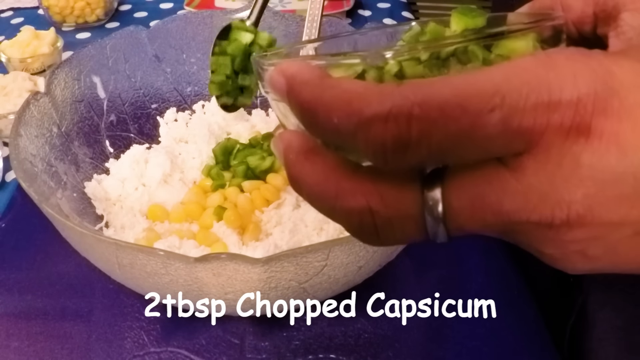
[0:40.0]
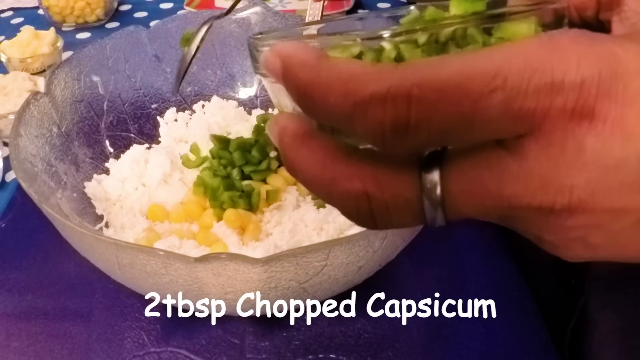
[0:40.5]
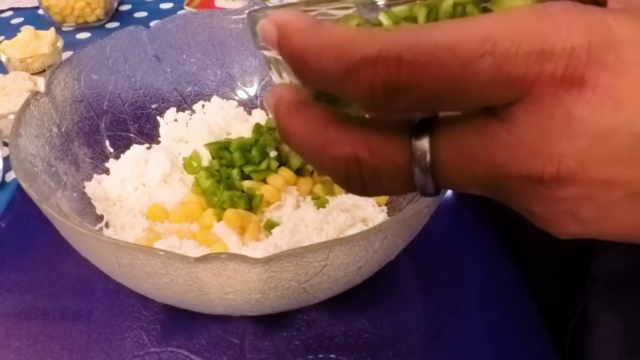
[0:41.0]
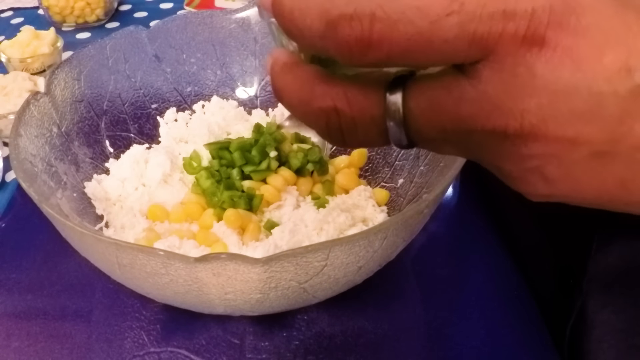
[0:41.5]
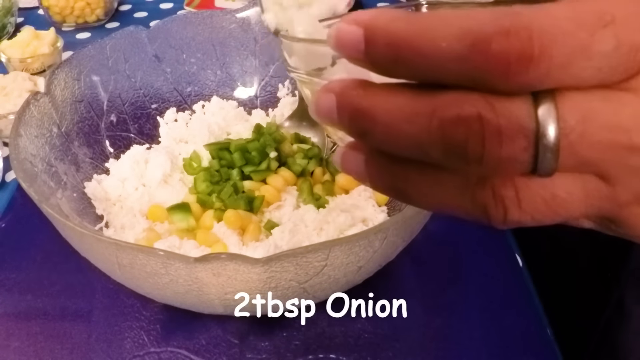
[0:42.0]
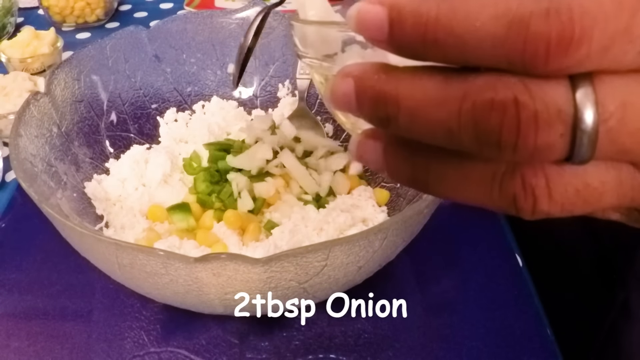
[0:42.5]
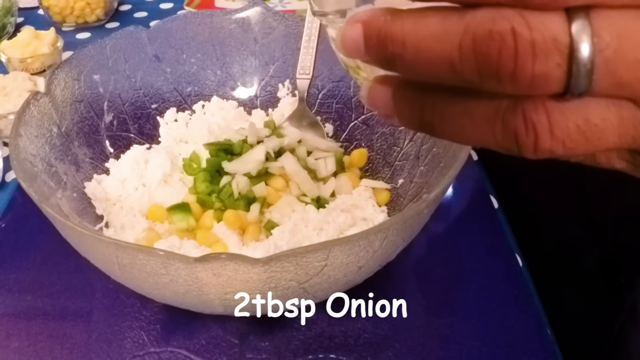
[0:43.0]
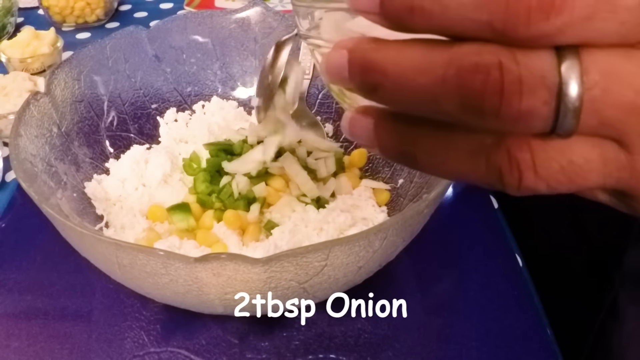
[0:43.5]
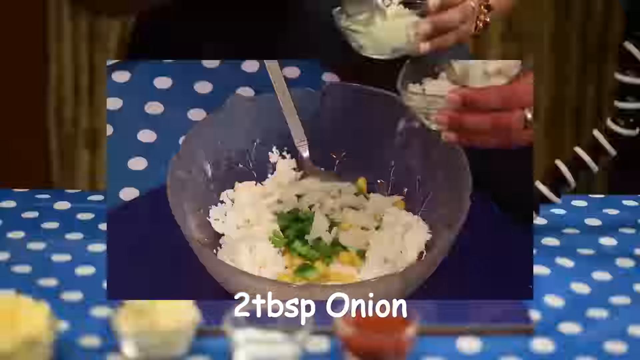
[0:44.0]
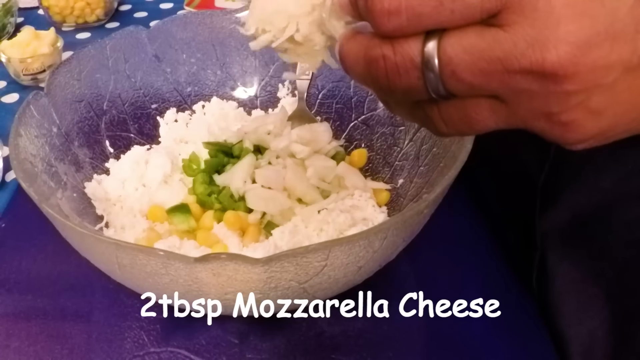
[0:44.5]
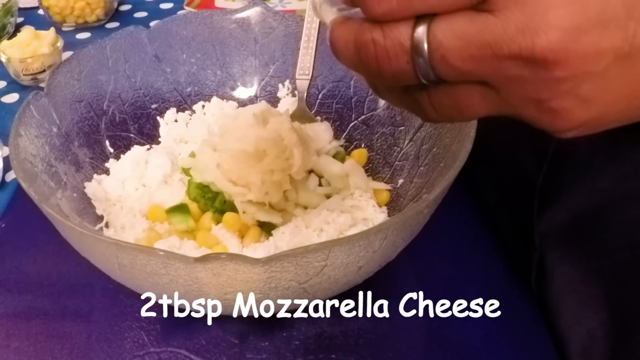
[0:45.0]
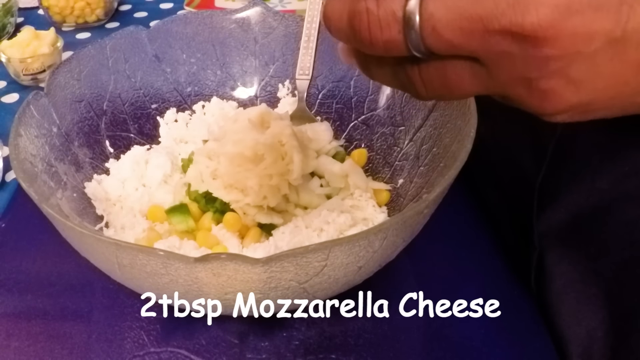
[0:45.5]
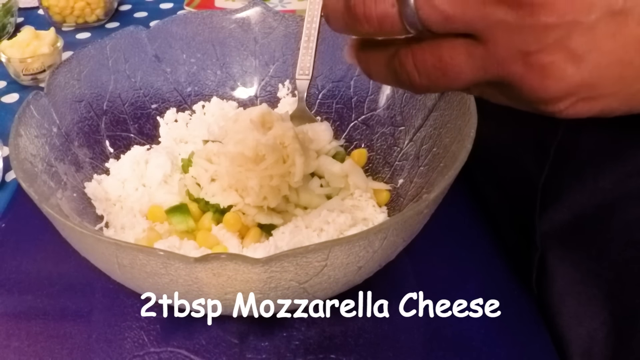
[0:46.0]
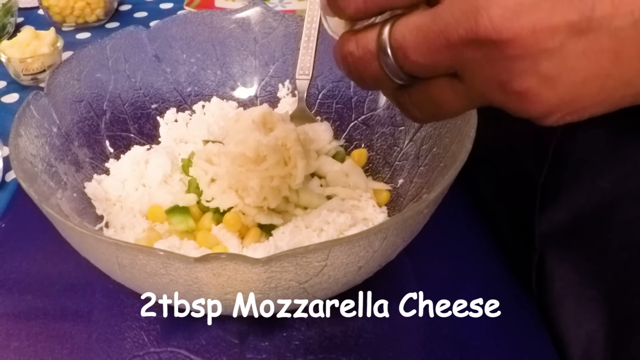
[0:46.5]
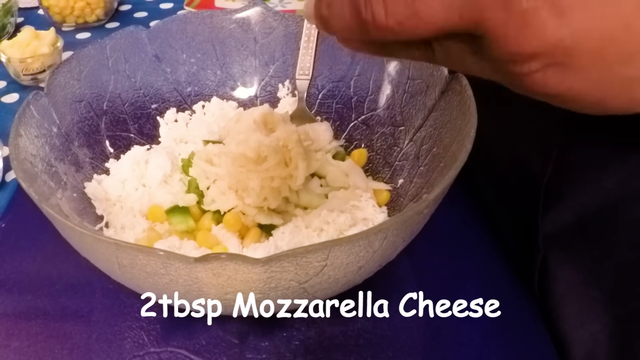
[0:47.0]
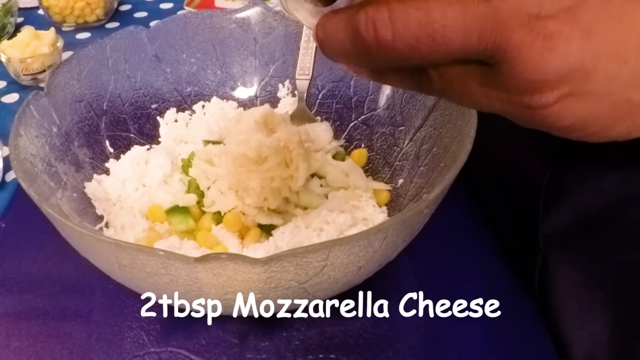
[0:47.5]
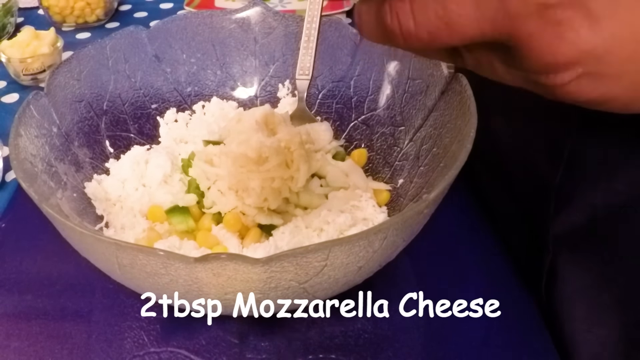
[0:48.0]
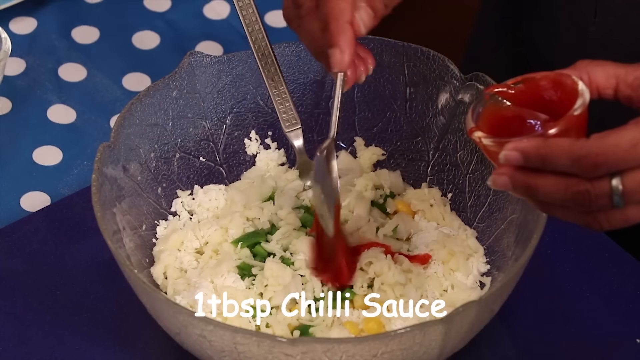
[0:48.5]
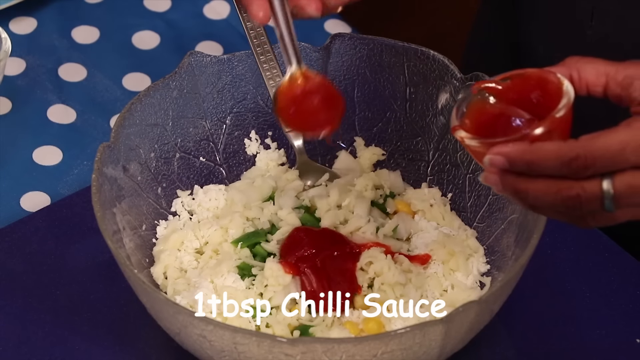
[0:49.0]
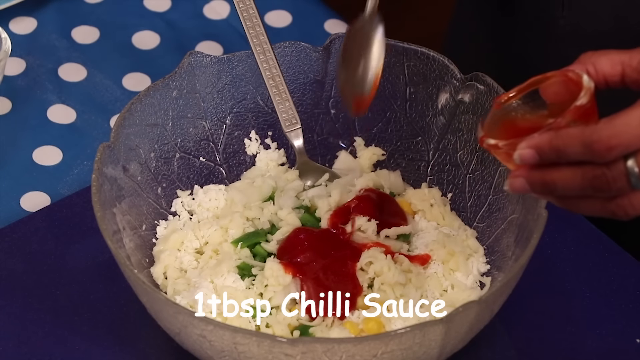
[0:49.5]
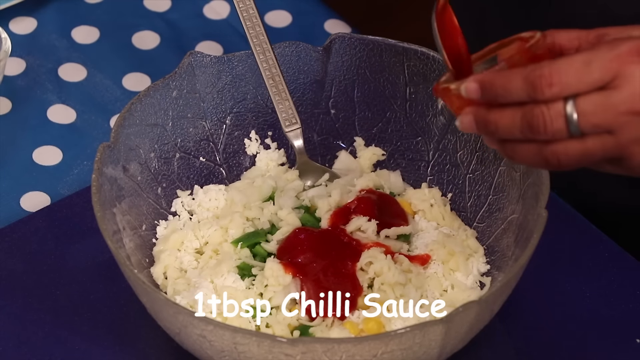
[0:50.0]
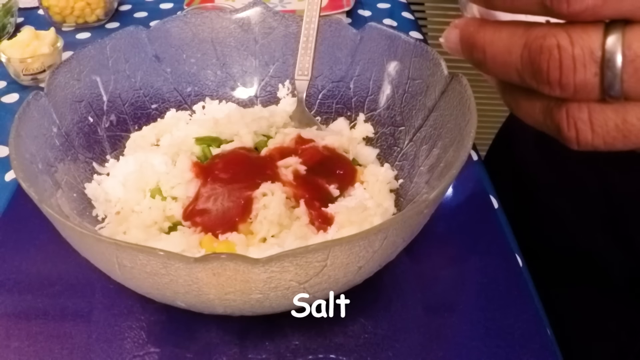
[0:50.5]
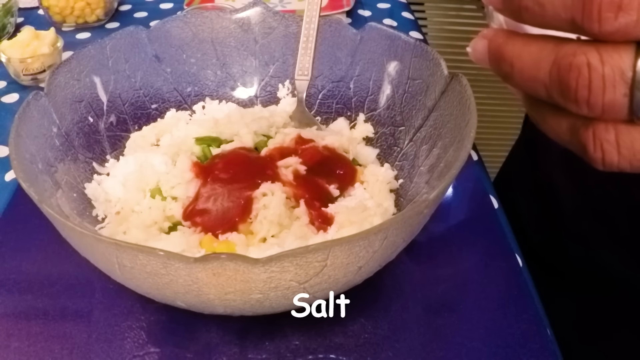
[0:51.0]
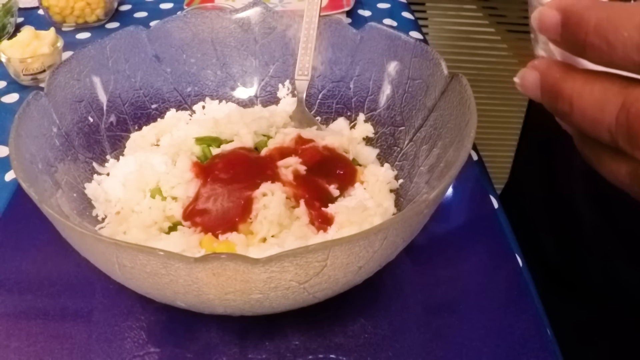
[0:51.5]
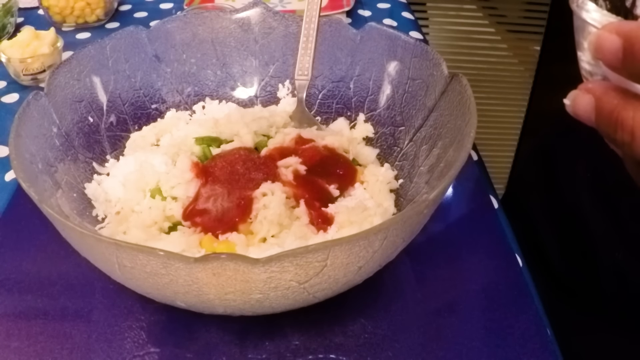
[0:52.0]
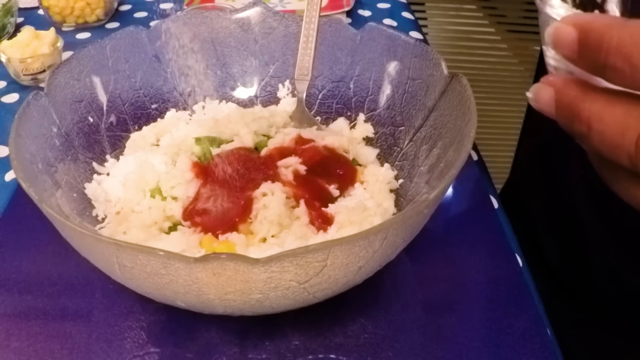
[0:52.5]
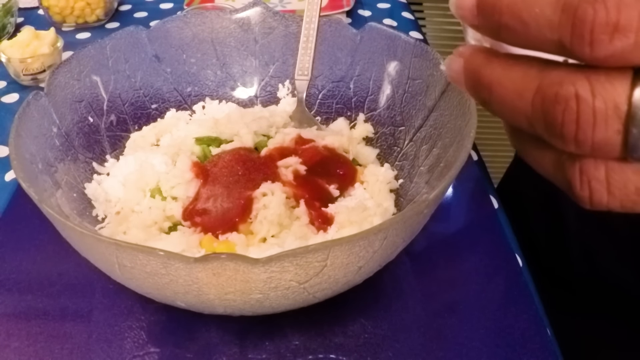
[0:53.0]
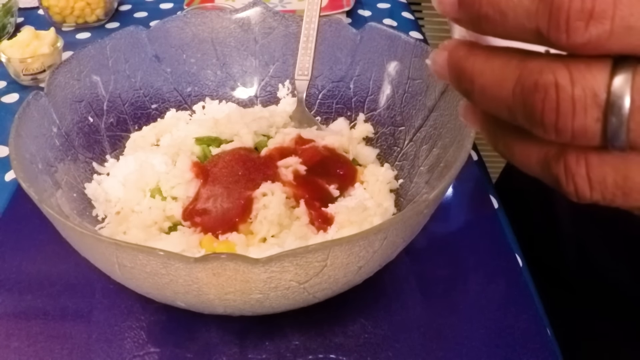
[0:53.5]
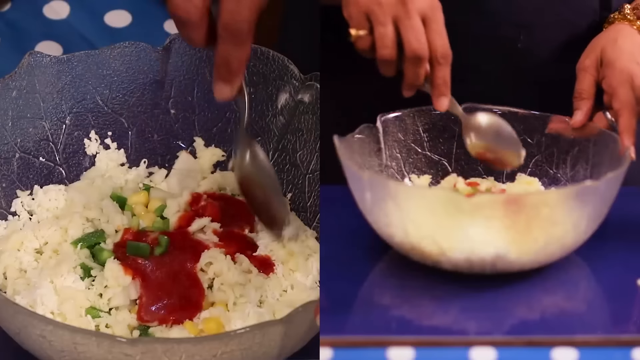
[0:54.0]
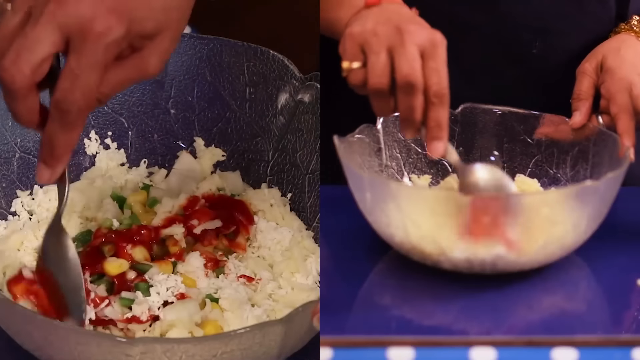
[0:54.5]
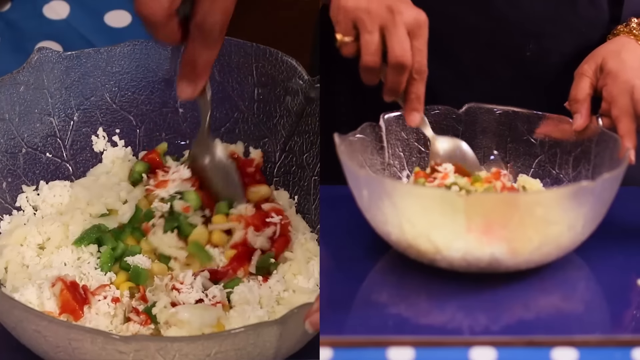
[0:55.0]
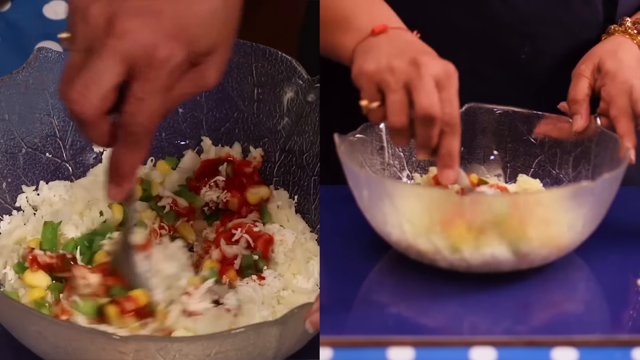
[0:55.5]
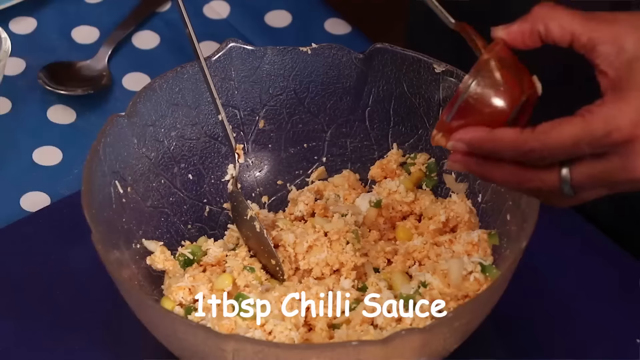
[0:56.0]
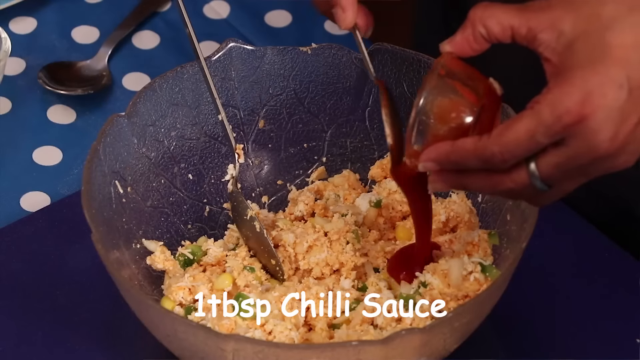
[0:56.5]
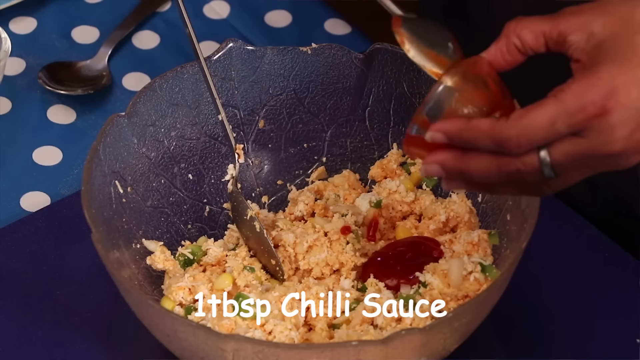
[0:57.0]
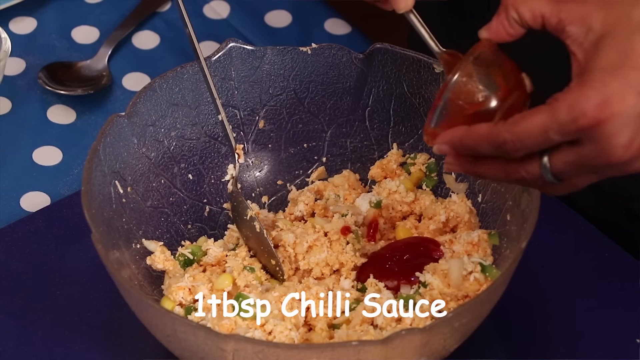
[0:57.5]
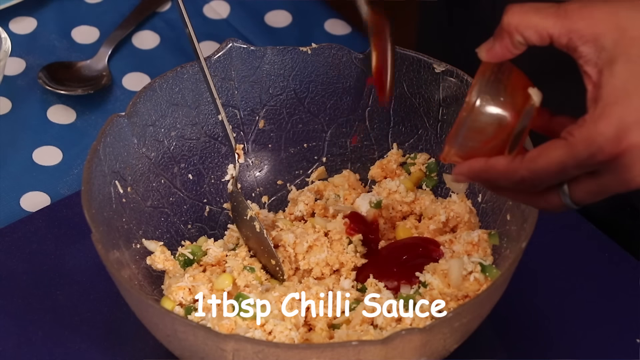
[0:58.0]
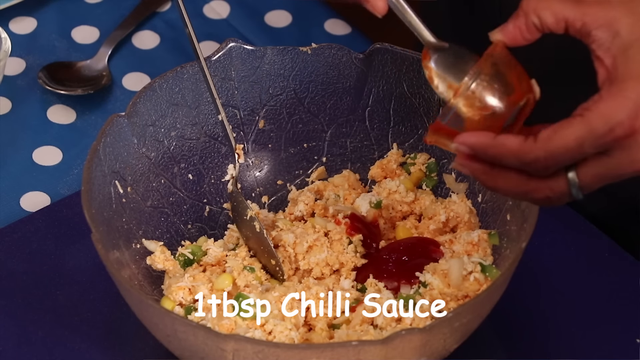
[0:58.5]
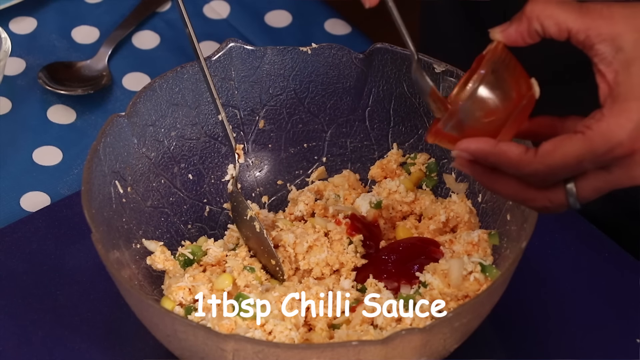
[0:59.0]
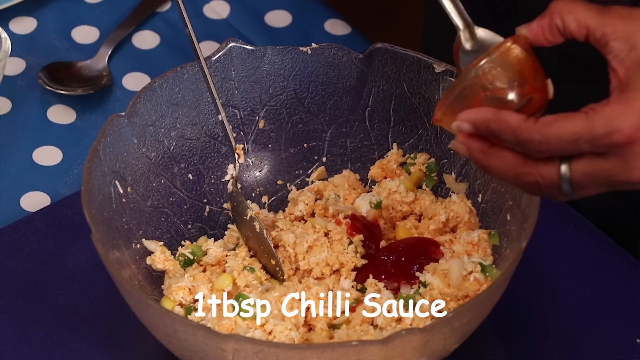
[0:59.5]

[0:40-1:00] She spoons everything together, and on-screen text includes the word onion with the O capitalized. In a zoomed-in shot, the bowl is on a blue tabletop; on the right side there seem to be polka dots, while the area at the top with the bowls is solid blue. She scoops in mozzarella cheese, which is clumped in the middle like a ball, scooping it out a couple of times and using the spoon to get the excess off. Chili sauce is added from a glass jar, and she appears to sprinkle in some salt. A side-by-side shot follows: on the left the view is from the top looking down, and on the right it is from the side. She mashes and stirs all the ingredients with a spoon, adds more chili sauce, and mixes it all well.